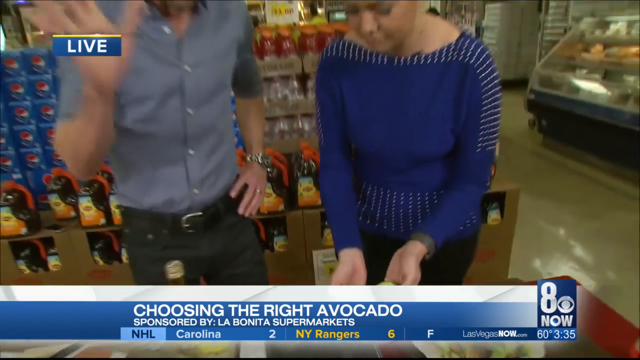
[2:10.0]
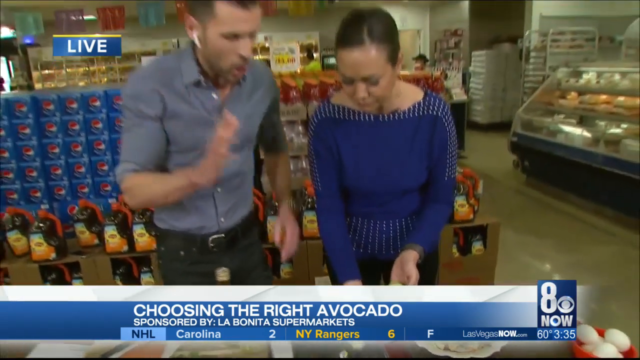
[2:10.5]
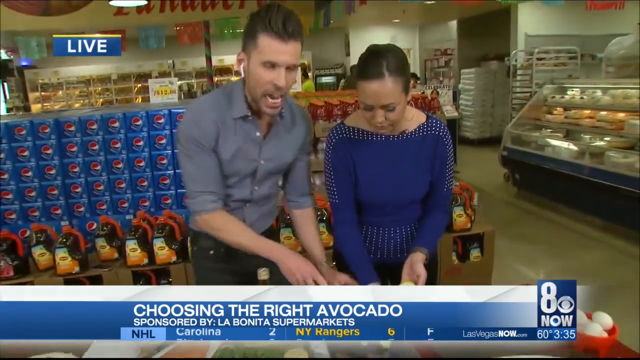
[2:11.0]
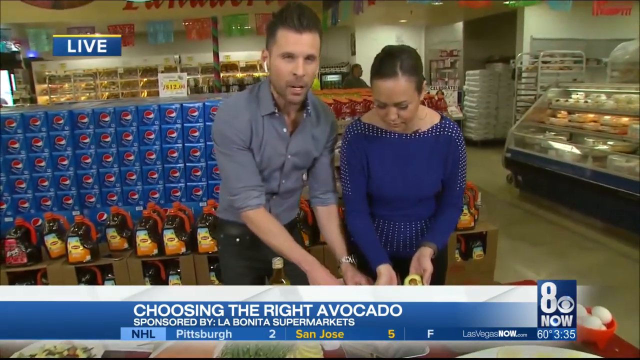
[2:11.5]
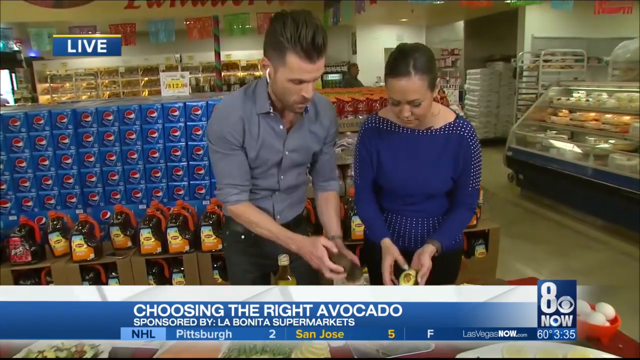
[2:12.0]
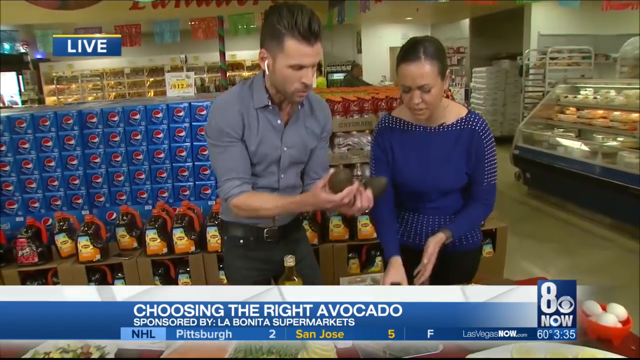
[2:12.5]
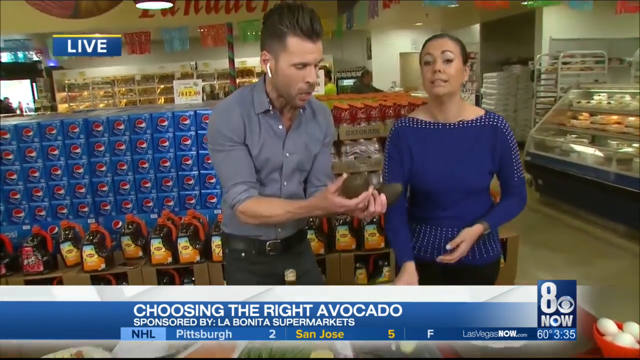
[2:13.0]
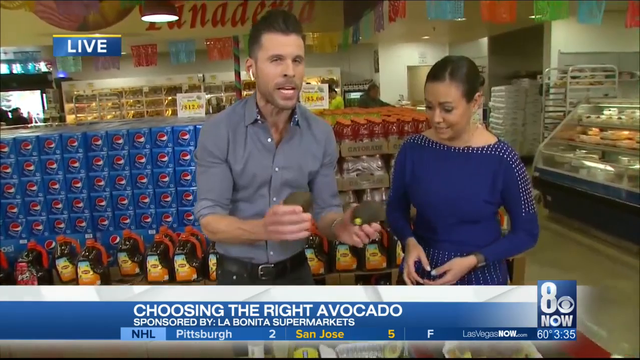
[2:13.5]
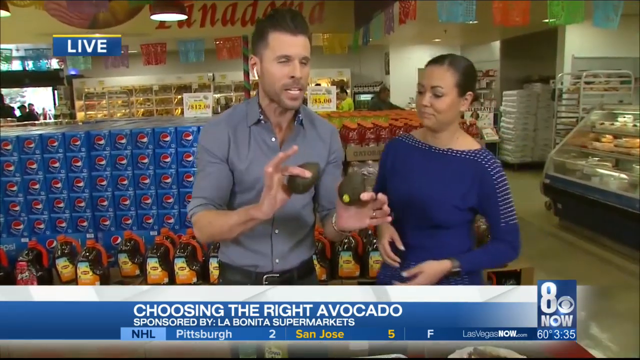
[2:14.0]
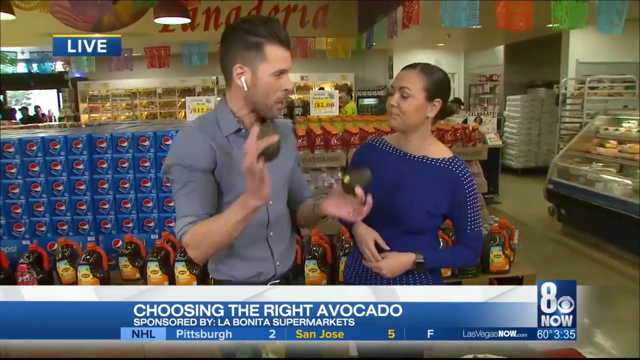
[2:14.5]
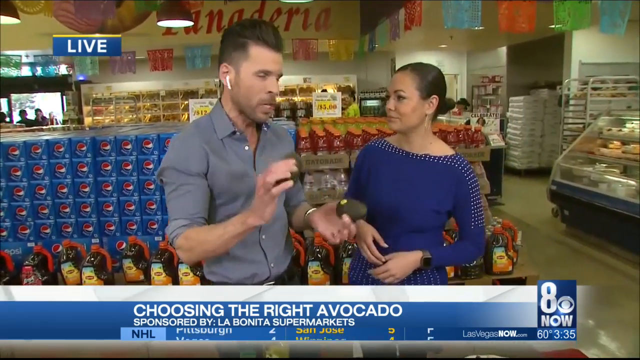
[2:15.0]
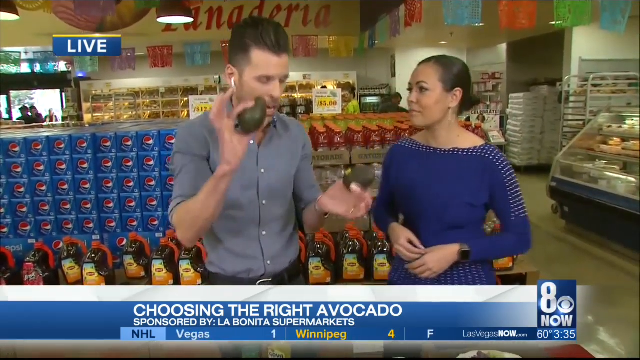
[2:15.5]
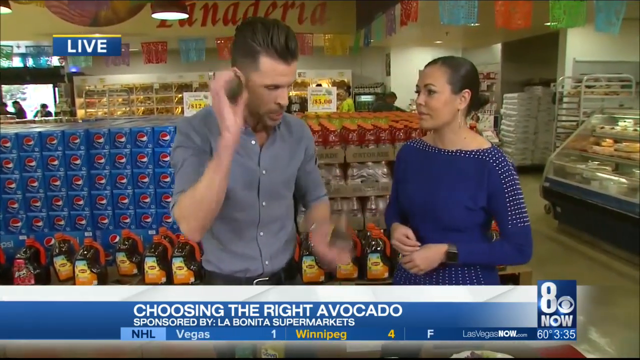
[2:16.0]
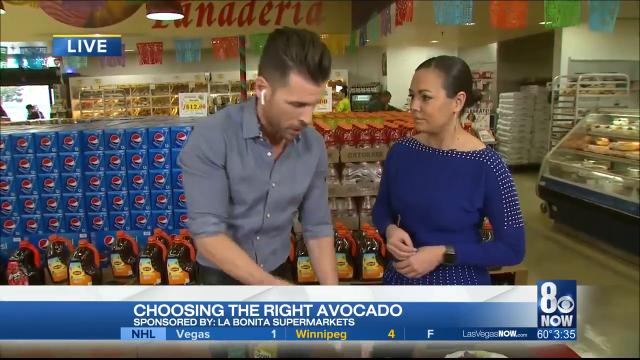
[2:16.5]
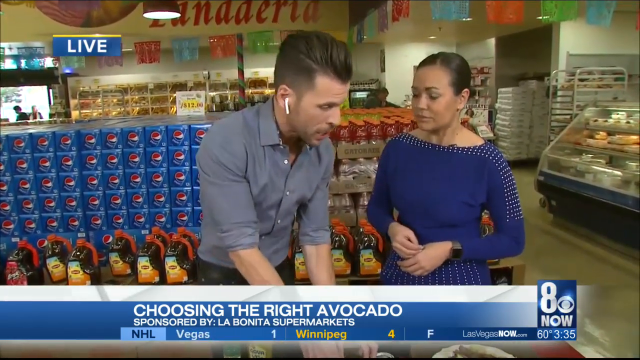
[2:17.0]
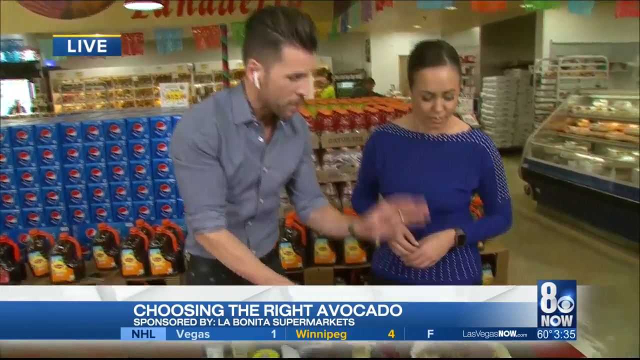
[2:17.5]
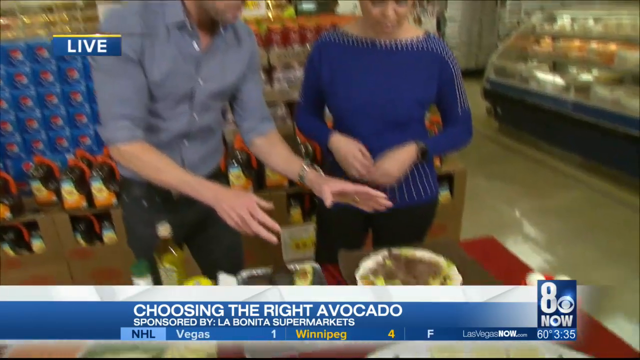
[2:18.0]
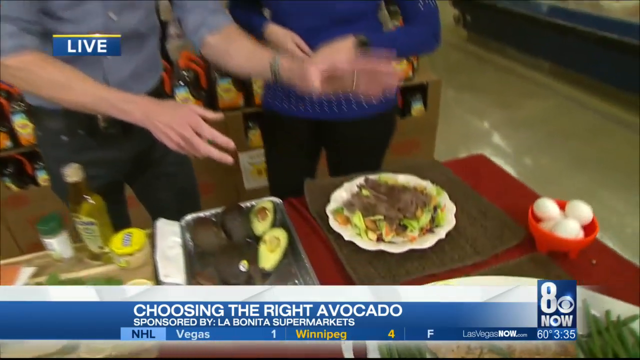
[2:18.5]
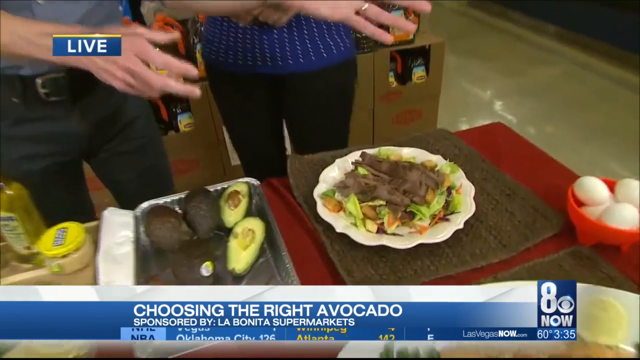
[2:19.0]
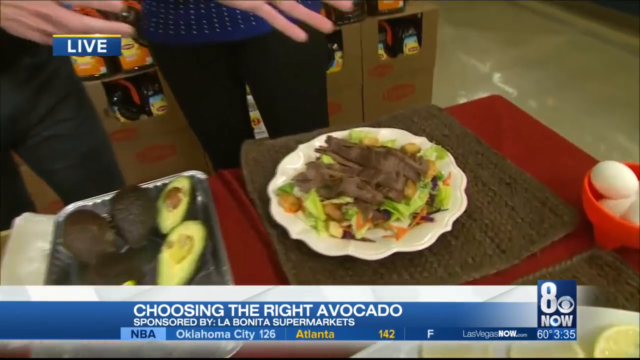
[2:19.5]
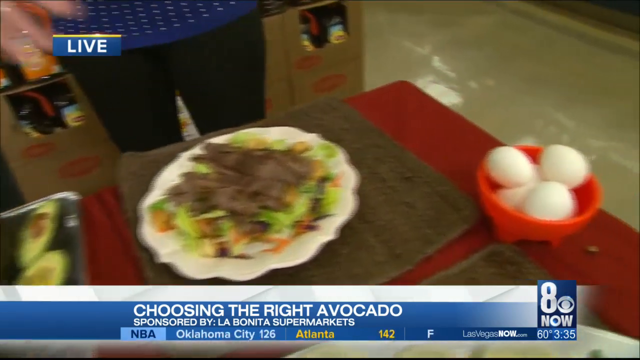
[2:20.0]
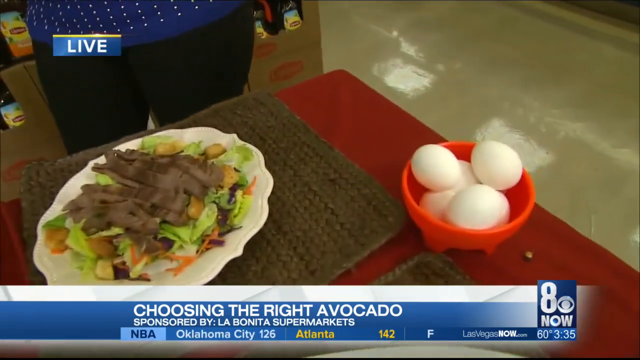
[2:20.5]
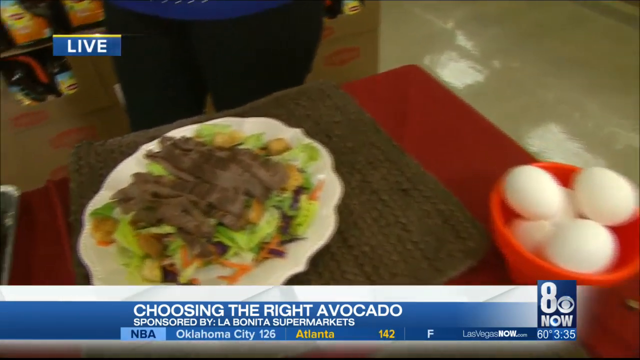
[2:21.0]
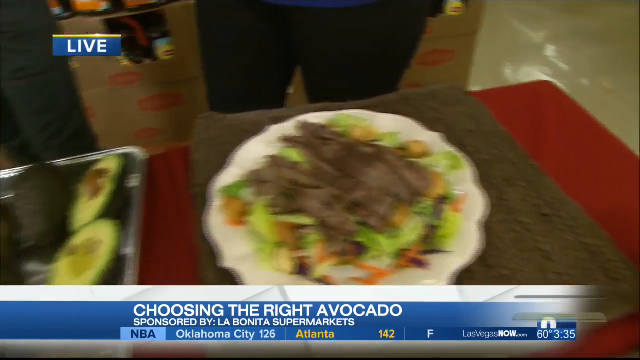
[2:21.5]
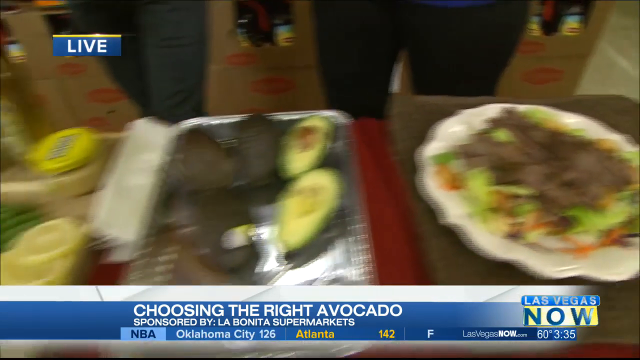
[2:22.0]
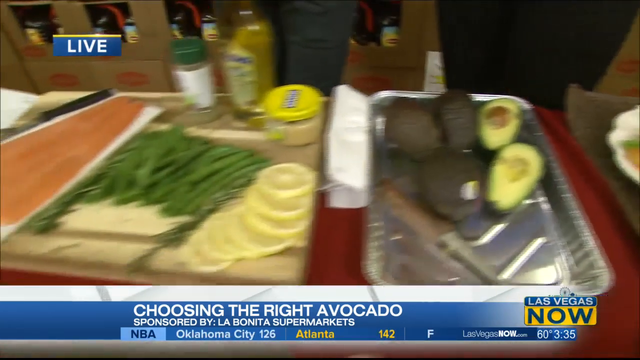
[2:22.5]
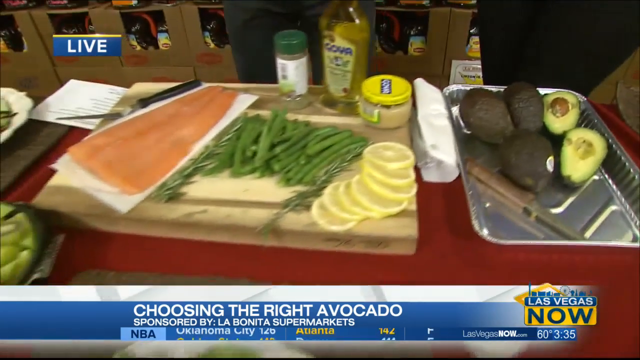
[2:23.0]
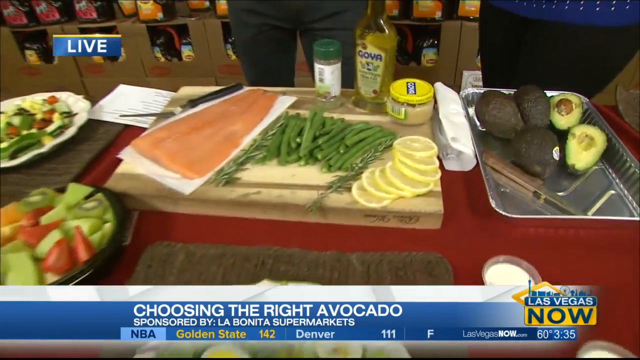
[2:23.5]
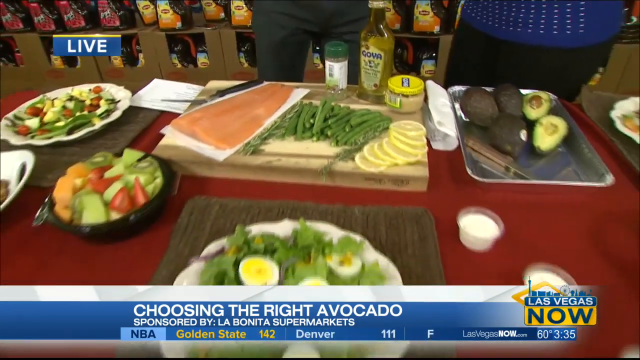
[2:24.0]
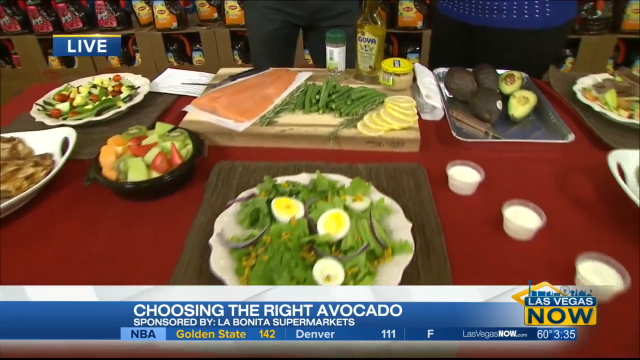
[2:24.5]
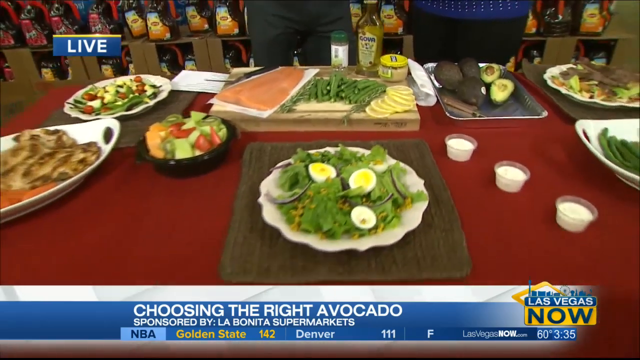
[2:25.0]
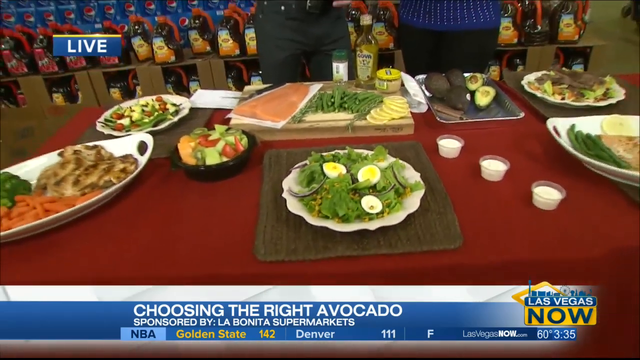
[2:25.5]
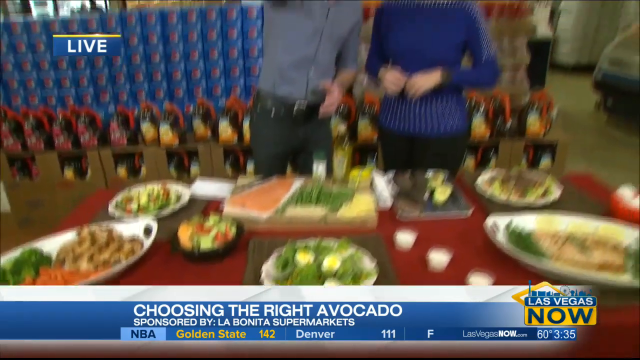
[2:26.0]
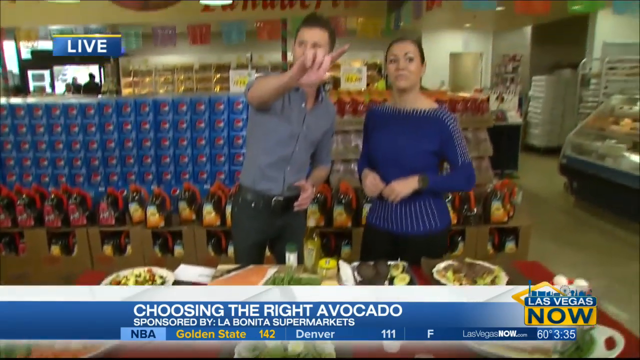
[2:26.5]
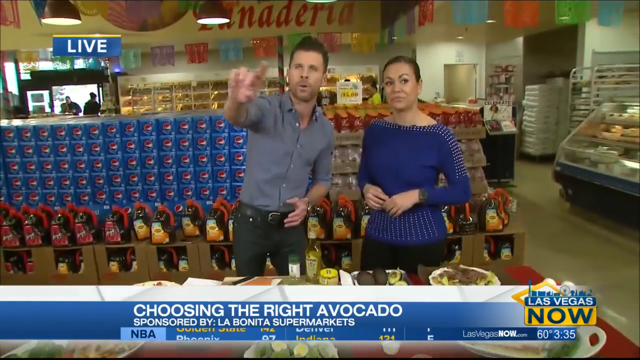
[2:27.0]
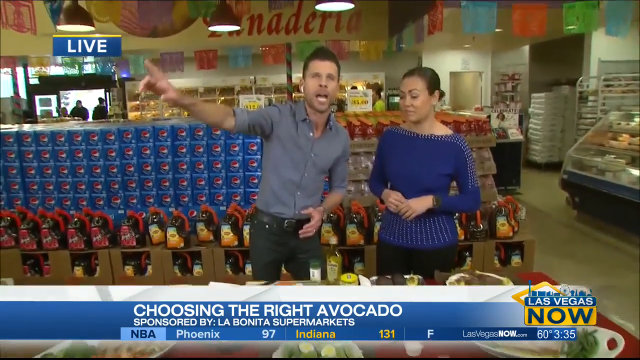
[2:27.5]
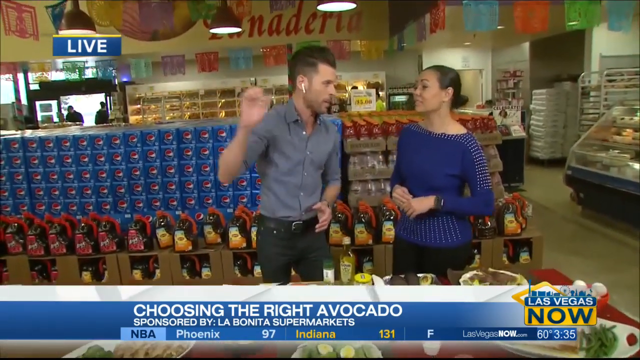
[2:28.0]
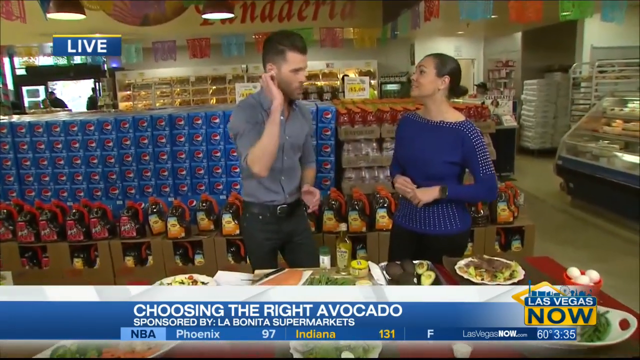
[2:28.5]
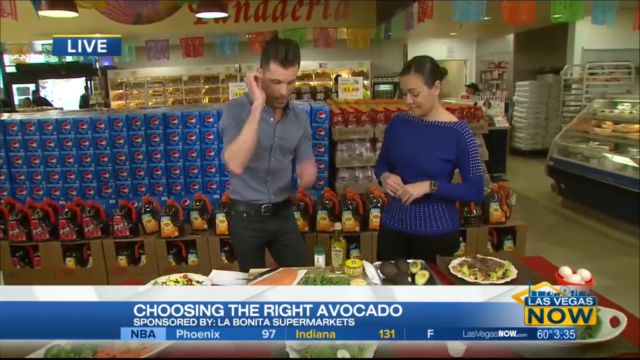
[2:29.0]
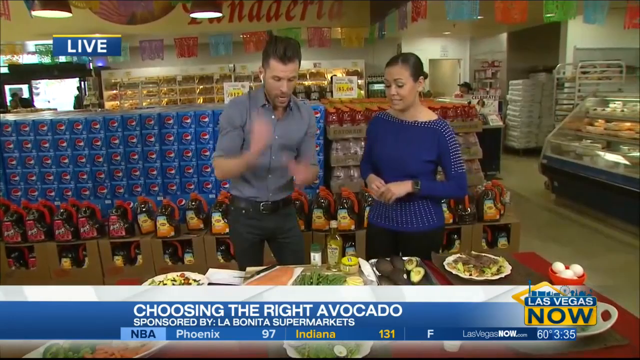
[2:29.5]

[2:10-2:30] Two people handle avocados; one avocado has been split open into two perfect halves. The man wears a gray shirt and black pants, and the lady wears a blue shirt and black pants. Text indicates sponsorship by LA Bonita Supermarkets. They are inside a supermarket, with Pepsi, Gatorade bottles and Limpton iced tea bottles behind them, and there is a bakery and deli. The man, wearing ear pods, puts up avocados and talks to the camera. The food is then shown: some type of beef or something on top of a salad, a little thing of eggs, salmon with asparagus and lemon, a little fruit tray with strawberries, kiwi and cantaloupe, more salad and eggs, and grilled chicken, carrots and broccoli, with little cups of orange in between.